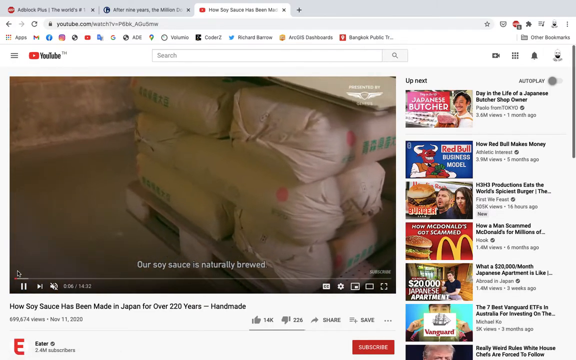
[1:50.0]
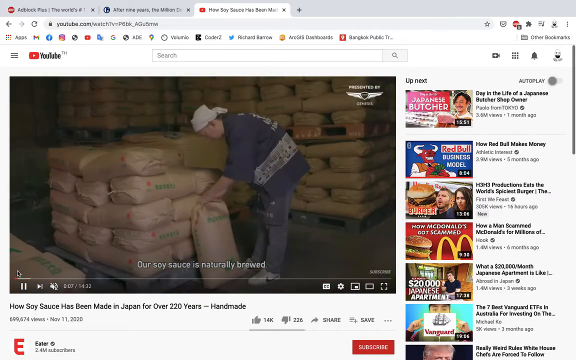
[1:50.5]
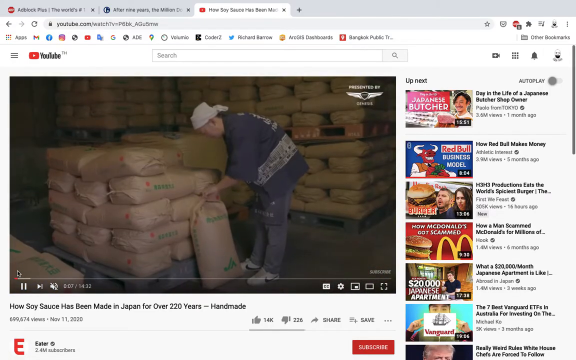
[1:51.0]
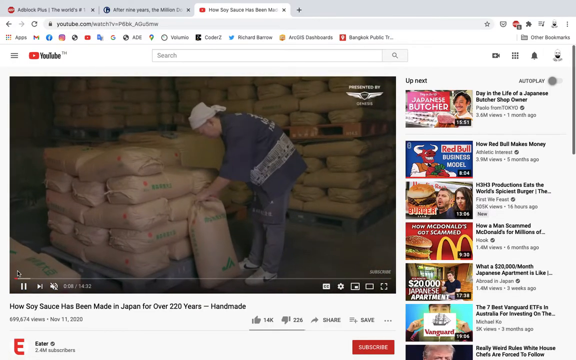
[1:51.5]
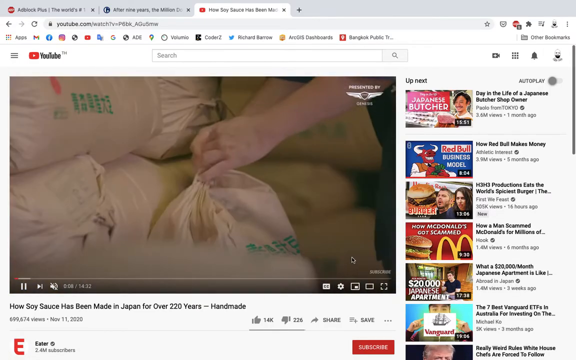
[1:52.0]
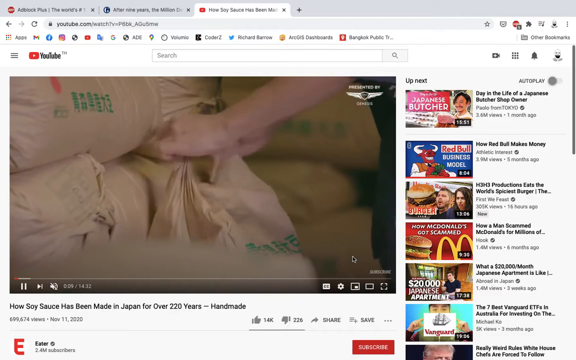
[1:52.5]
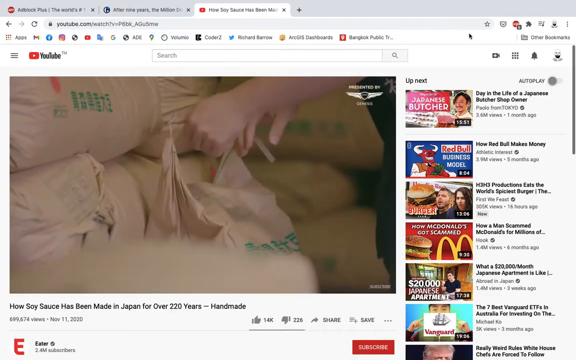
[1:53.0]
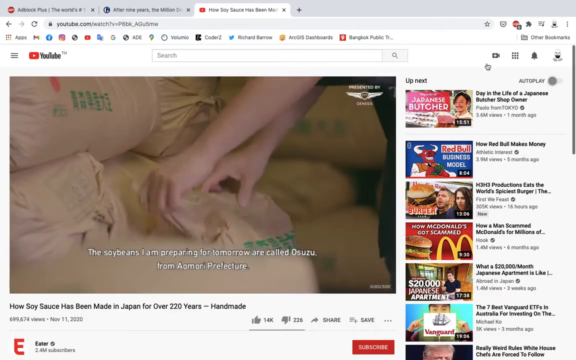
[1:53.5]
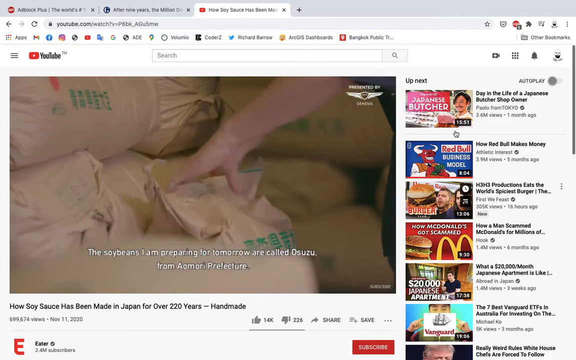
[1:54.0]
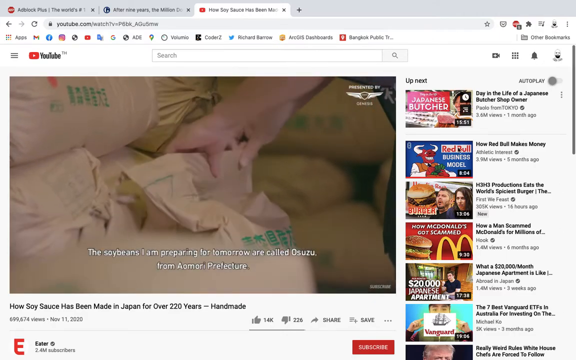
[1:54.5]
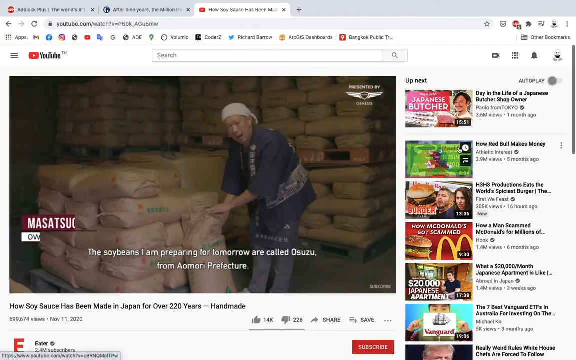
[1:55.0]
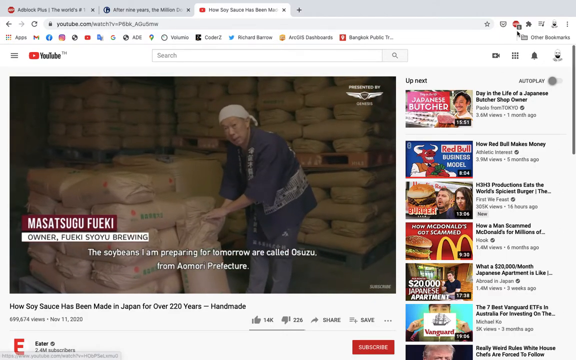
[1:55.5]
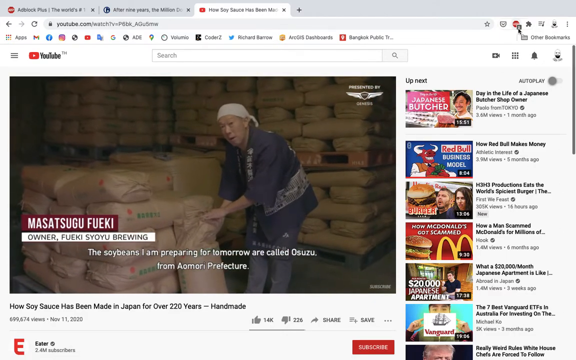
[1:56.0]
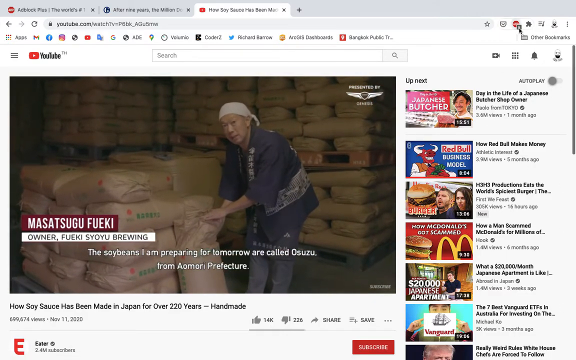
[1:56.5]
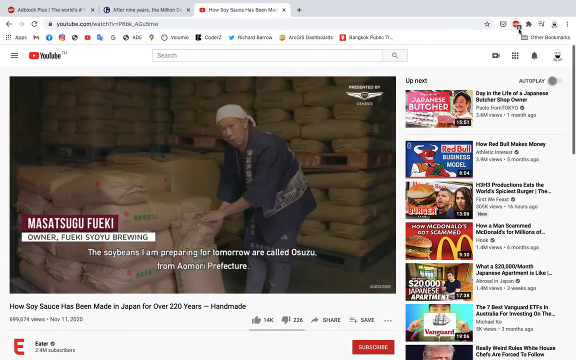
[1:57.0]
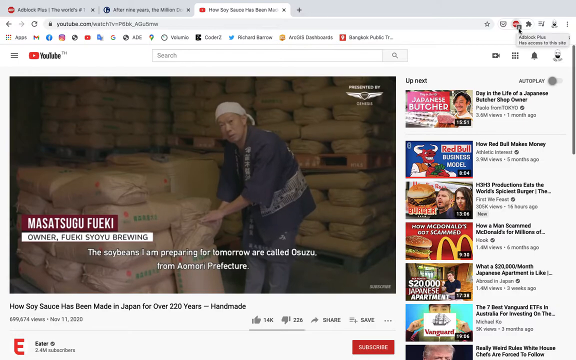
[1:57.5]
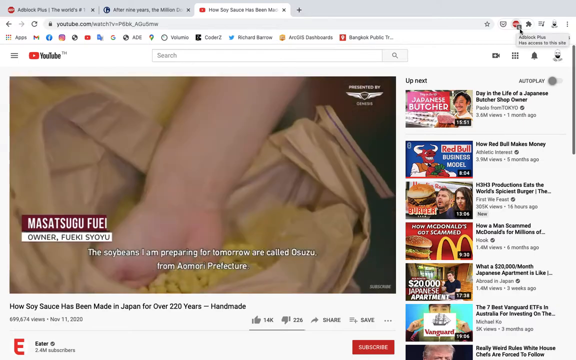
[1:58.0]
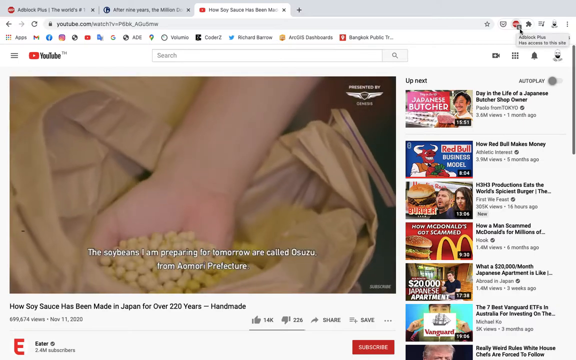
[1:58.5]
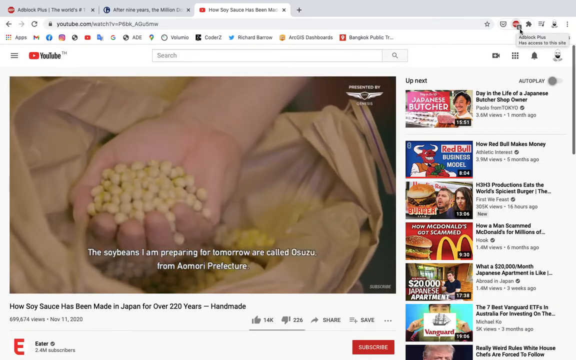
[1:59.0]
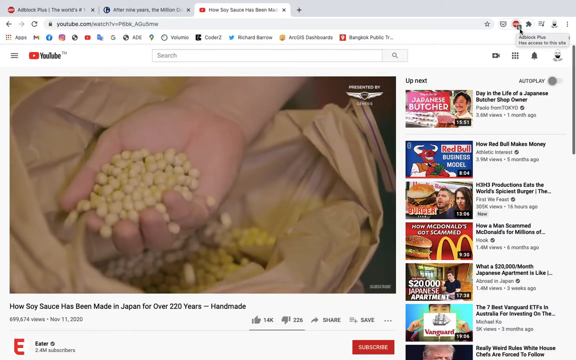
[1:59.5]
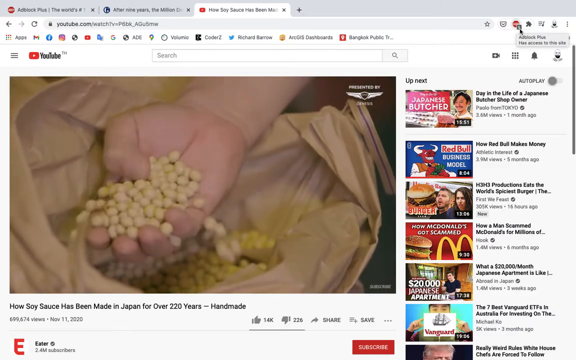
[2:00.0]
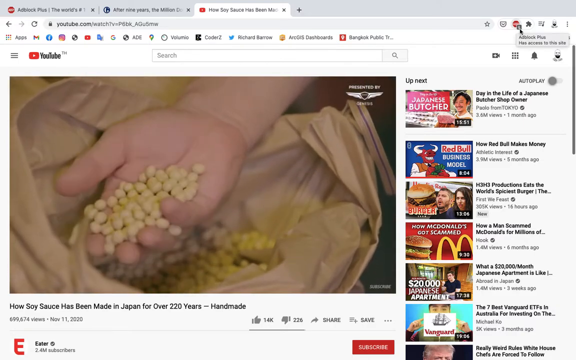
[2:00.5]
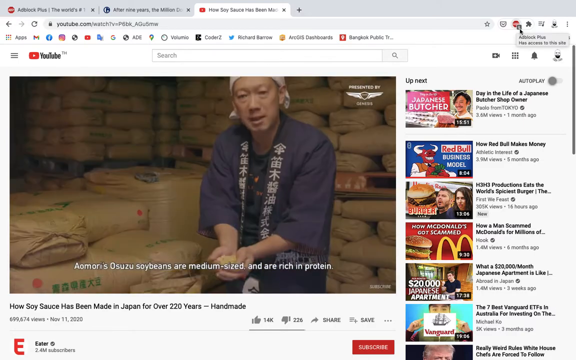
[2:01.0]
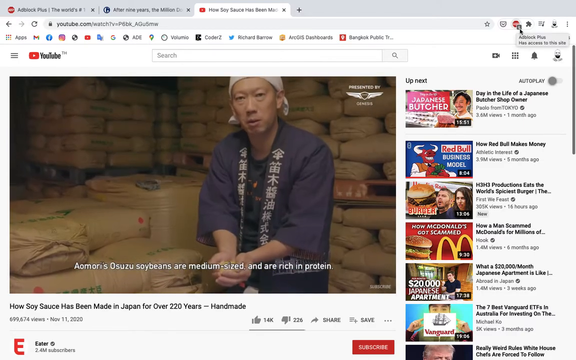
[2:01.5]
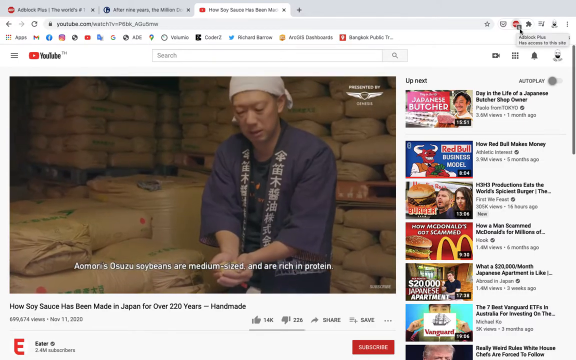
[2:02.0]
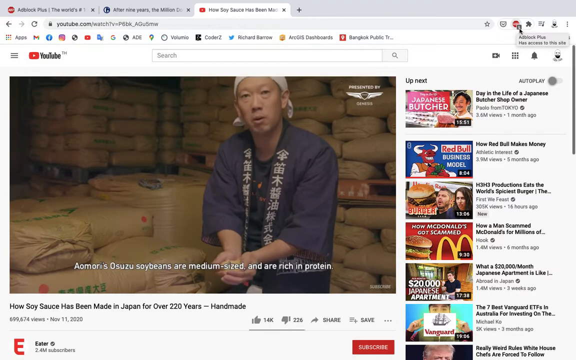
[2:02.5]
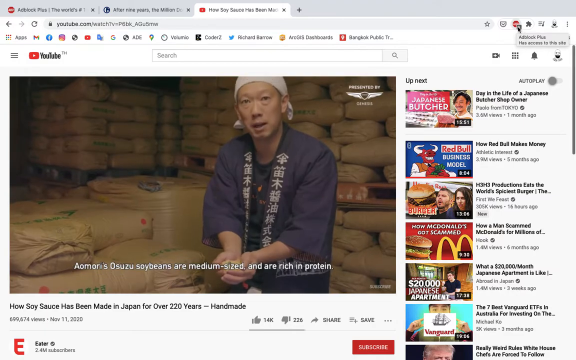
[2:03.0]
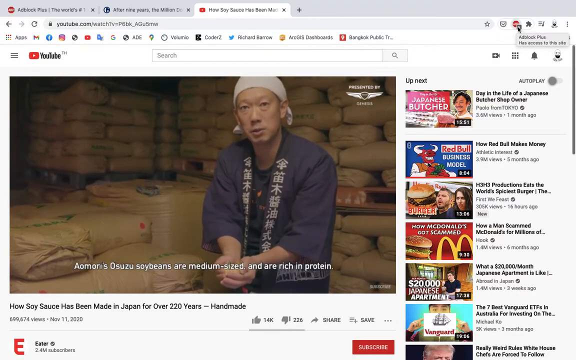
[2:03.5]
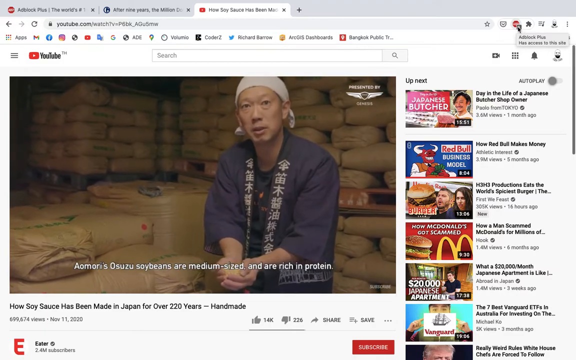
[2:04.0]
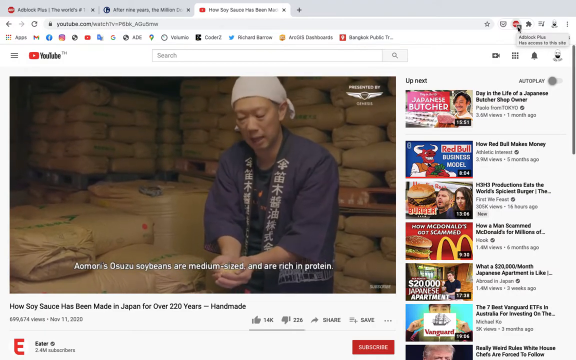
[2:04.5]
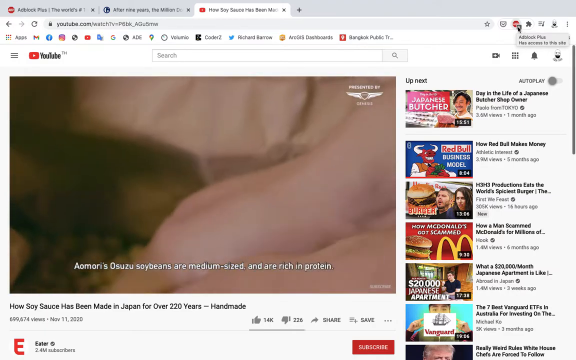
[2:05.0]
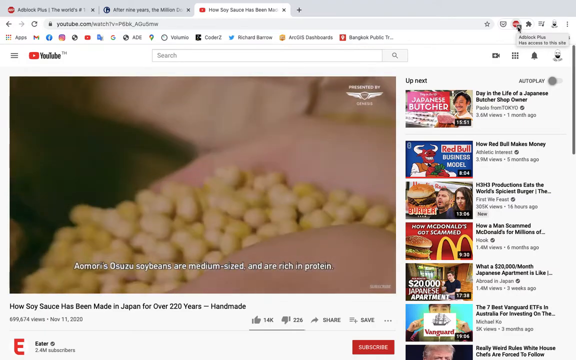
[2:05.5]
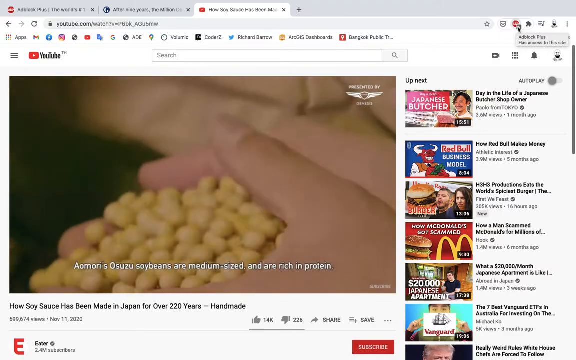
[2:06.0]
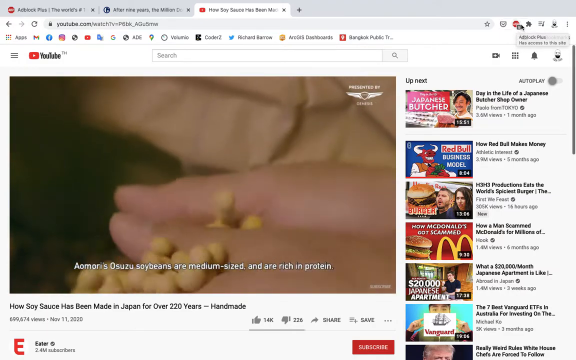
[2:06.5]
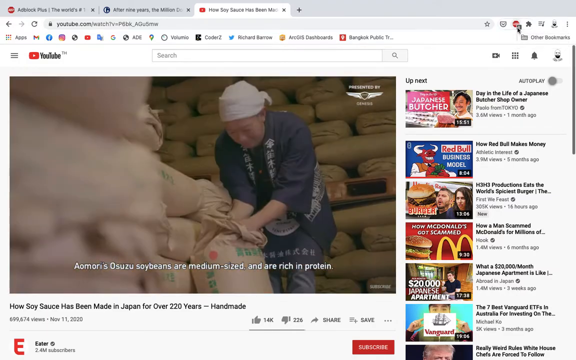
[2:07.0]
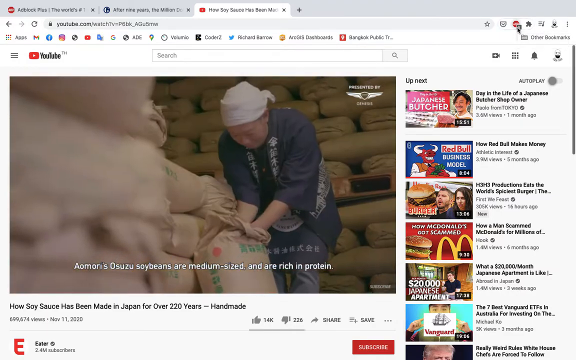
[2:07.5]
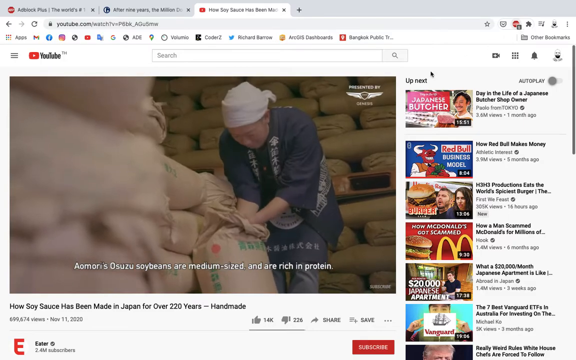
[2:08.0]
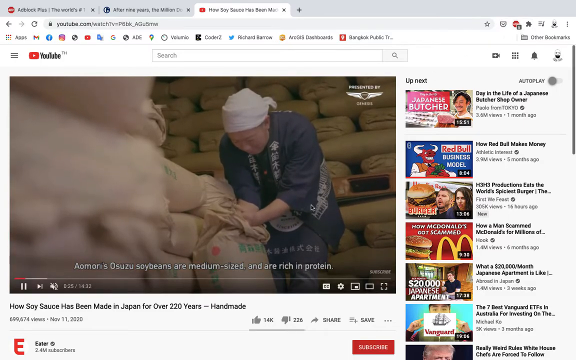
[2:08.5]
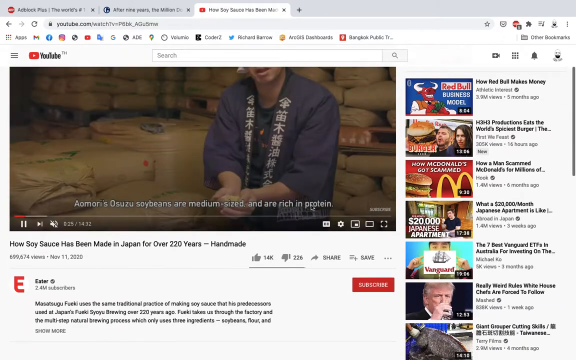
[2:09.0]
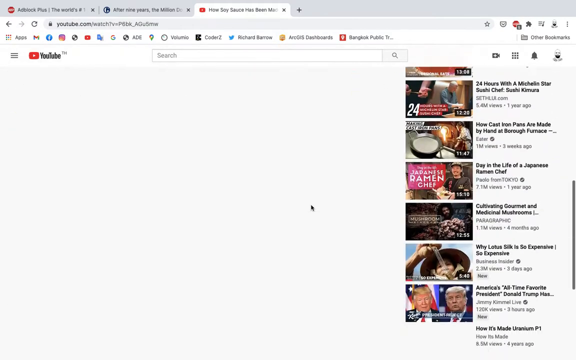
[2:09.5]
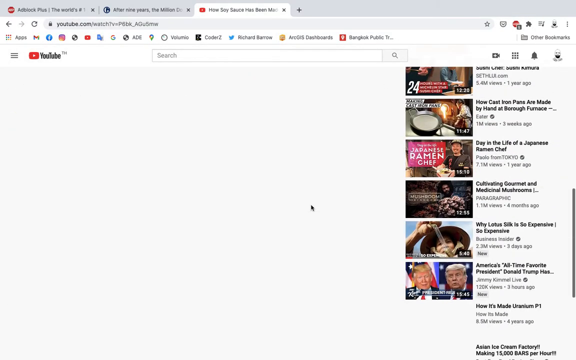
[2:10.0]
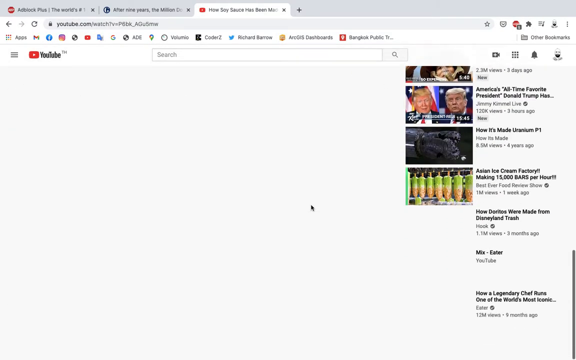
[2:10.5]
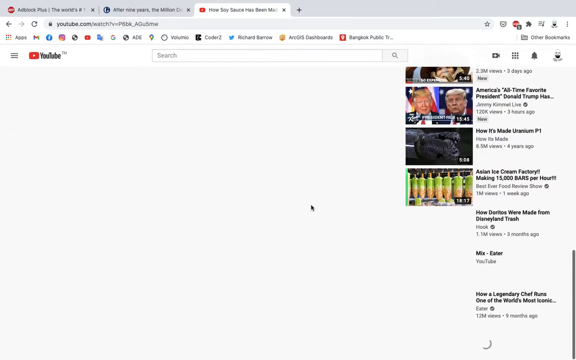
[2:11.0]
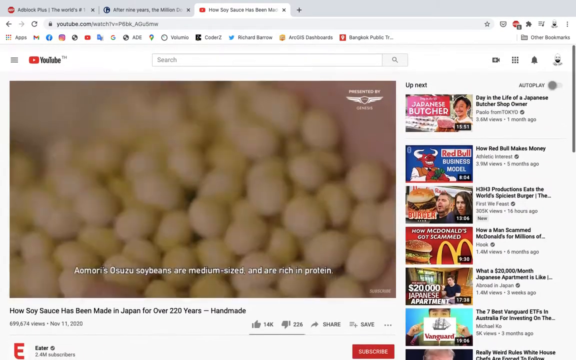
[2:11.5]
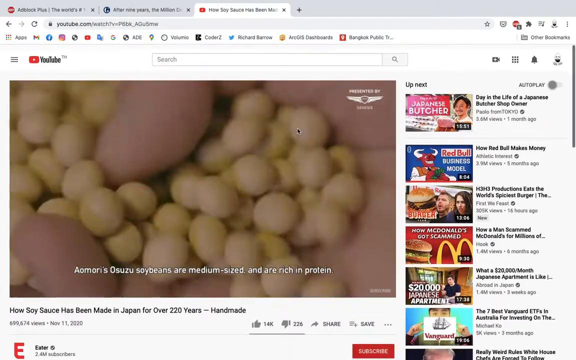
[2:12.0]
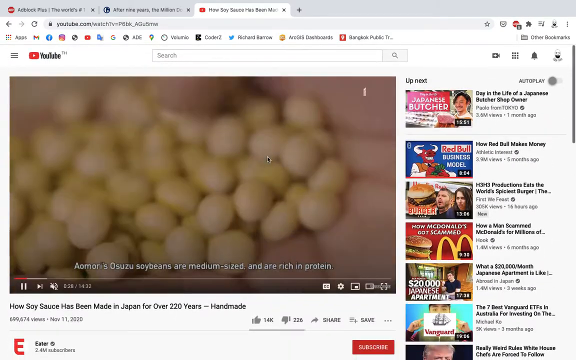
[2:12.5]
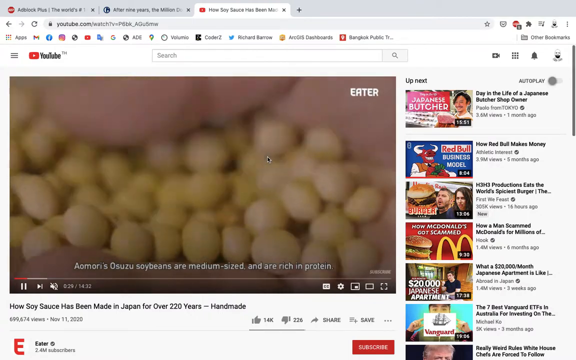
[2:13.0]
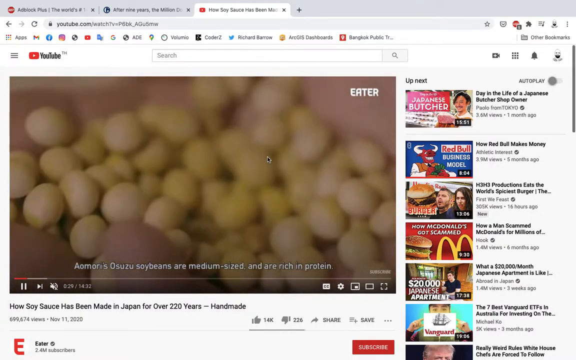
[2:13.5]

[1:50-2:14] The mouse cursor points to the top right of the page above the related YouTube videos, where an ad previously appeared, showing that the AdBlock Plus extension has now blocked ads from appearing in this section. The cursor then hovers over the AdBlock Plus Chrome extension button in the top right of the browser, bringing up a gray pop-up that says "AdBlock Plus has access to this site". A number one is now superimposed over the red AdBlock Plus button. The video about how soy sauce has been made in Japan for over 220 years continues to play, and the user briefly scrolls down the page. The video shows a man, presumably in a soy sauce factory, opening bags full of soybeans and holding the soybeans in his hand. He wears traditional Japanese attire: a white do-rag on his head and a navy blue, kimono-style jacket with three-quarter-length sleeves and Chinese lettering running down the lapels. He speaks directly to the camera. Text superimposed on the video includes "soybeans are medium sized and are rich in protein". In the top right of the video, a sponsored logo says the video is presented by Genesis.